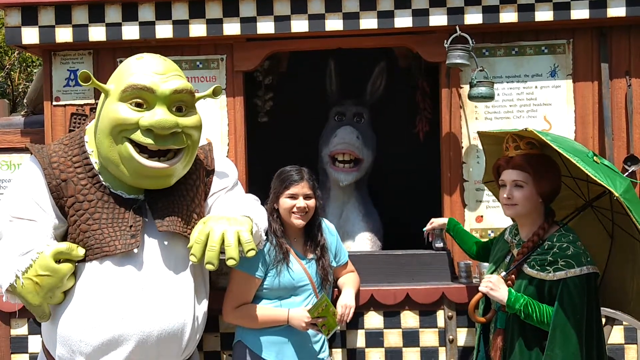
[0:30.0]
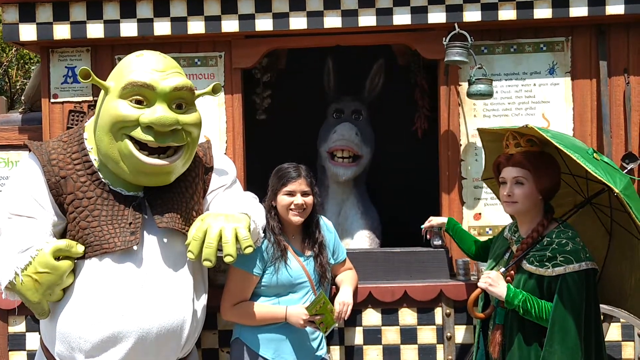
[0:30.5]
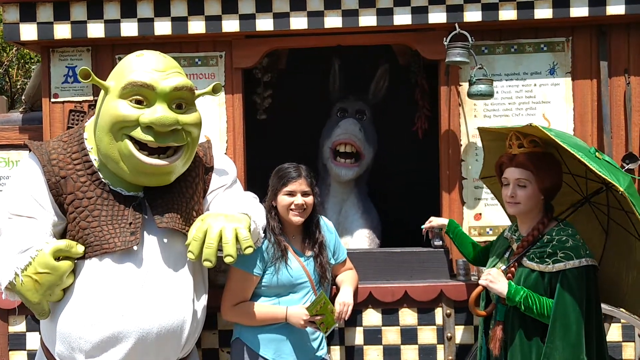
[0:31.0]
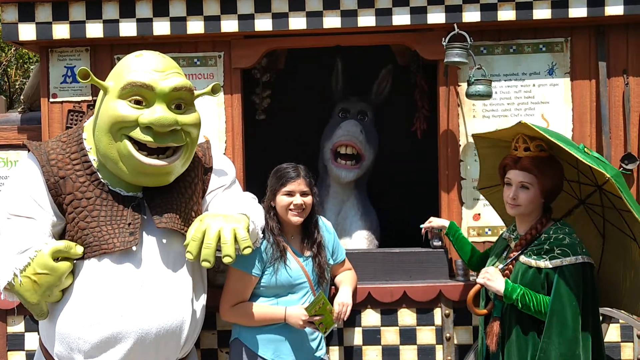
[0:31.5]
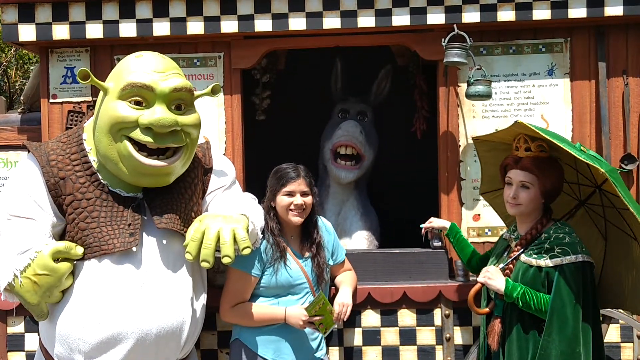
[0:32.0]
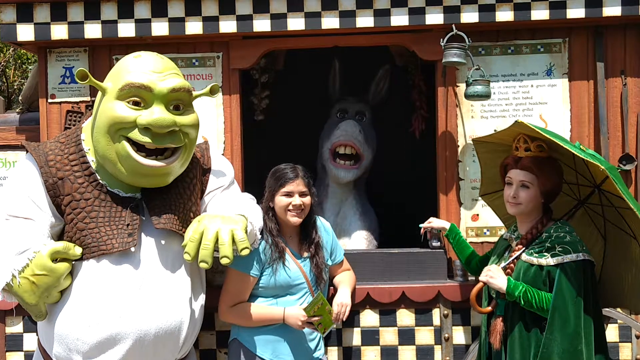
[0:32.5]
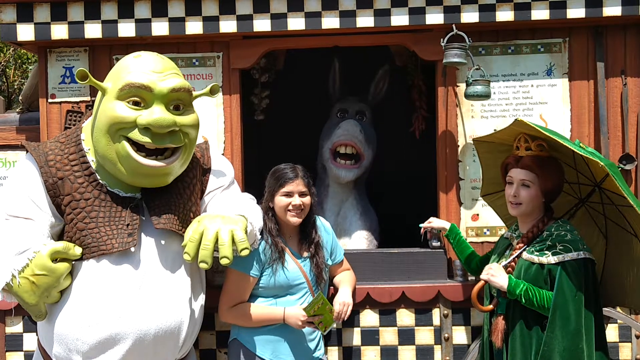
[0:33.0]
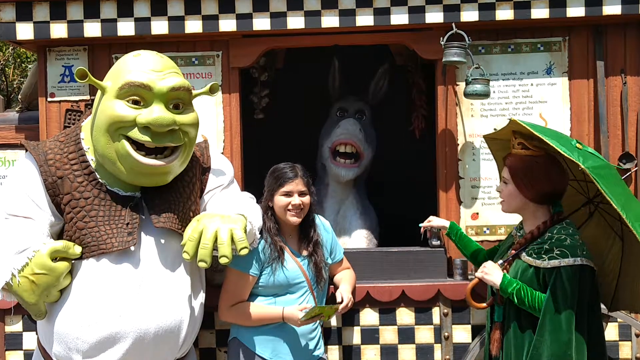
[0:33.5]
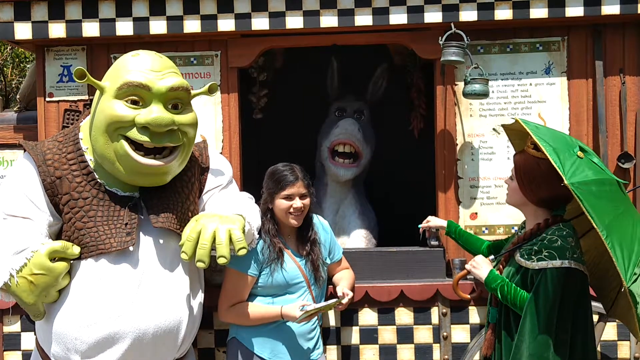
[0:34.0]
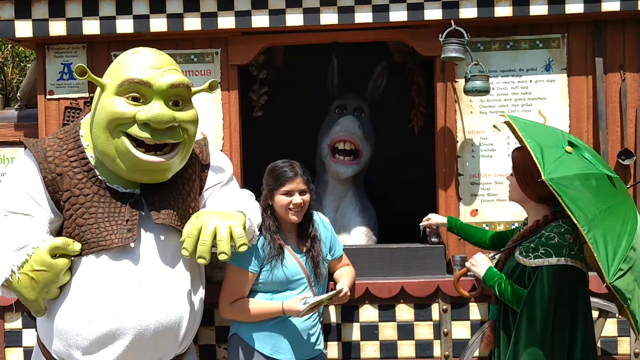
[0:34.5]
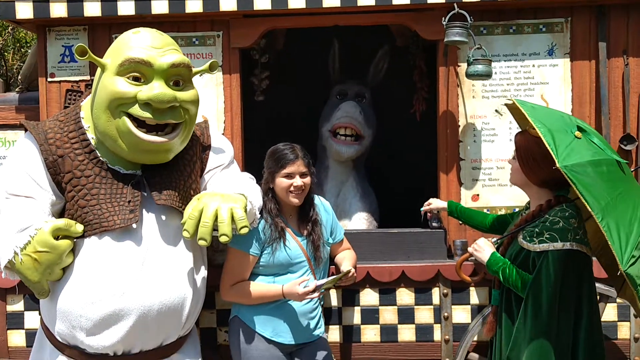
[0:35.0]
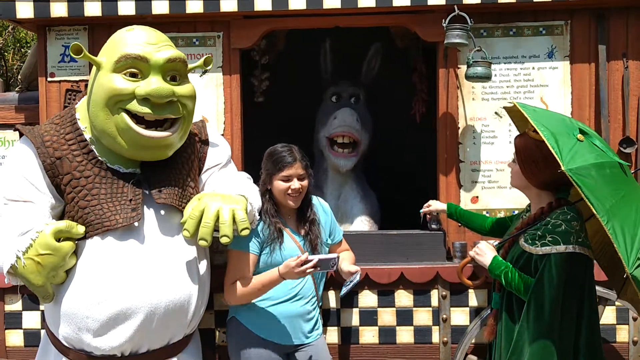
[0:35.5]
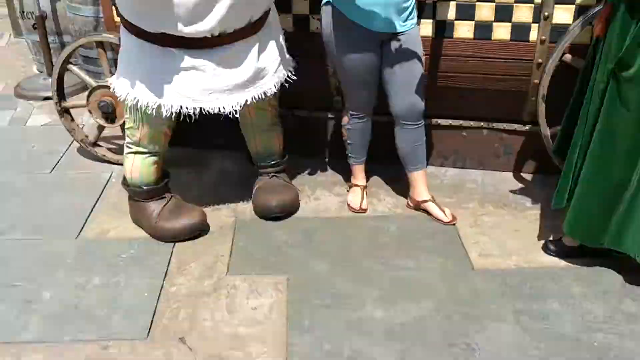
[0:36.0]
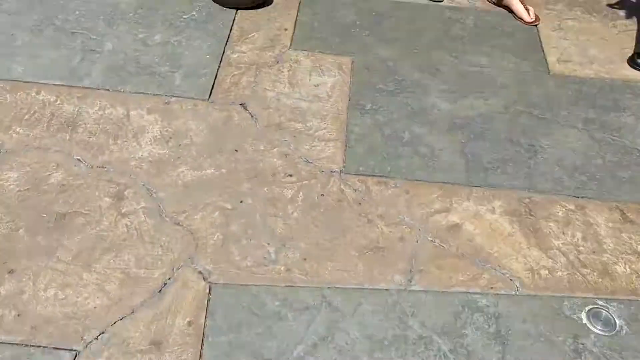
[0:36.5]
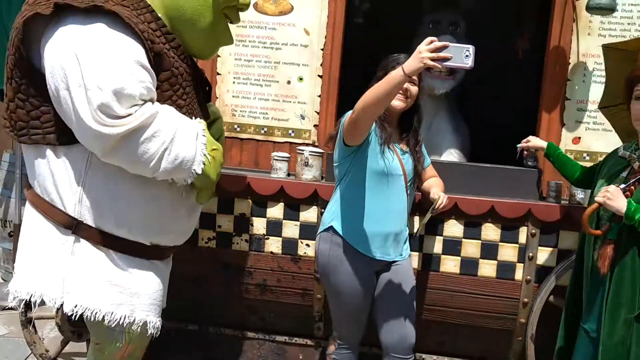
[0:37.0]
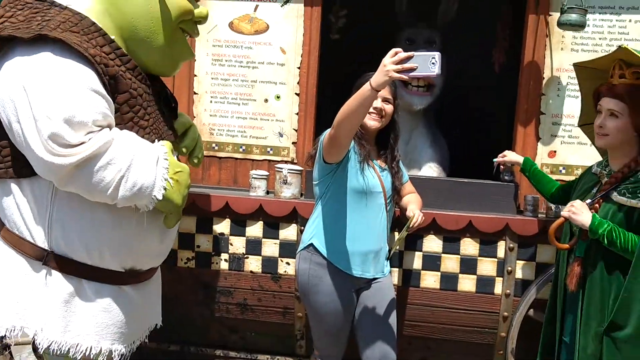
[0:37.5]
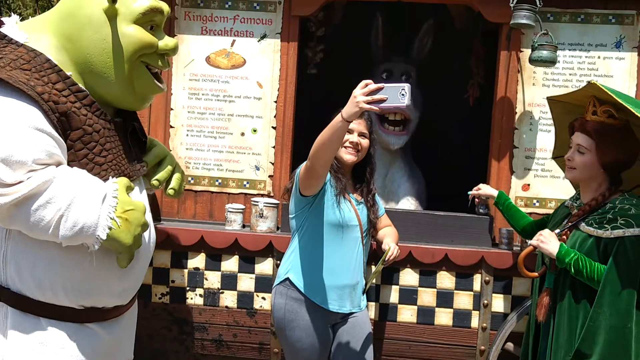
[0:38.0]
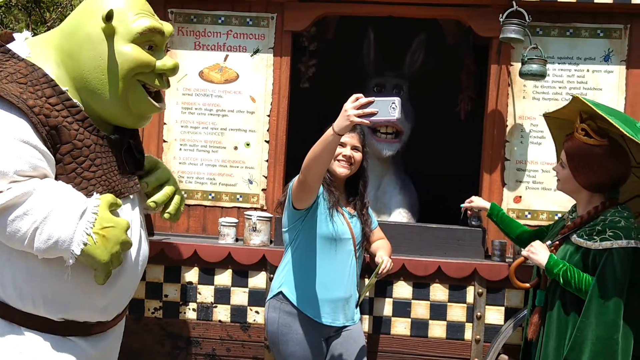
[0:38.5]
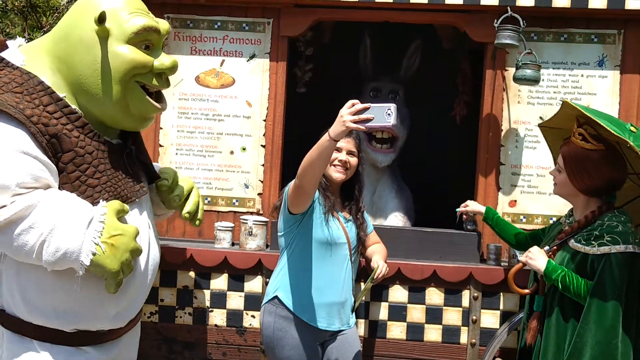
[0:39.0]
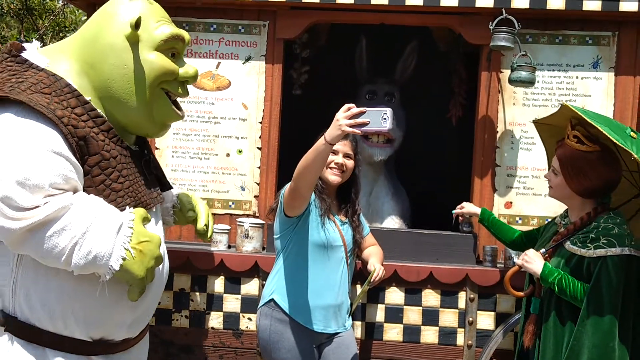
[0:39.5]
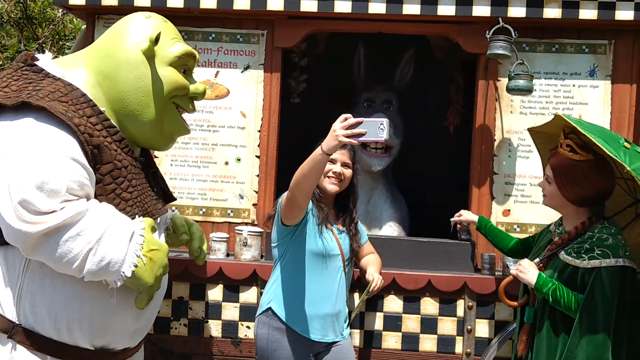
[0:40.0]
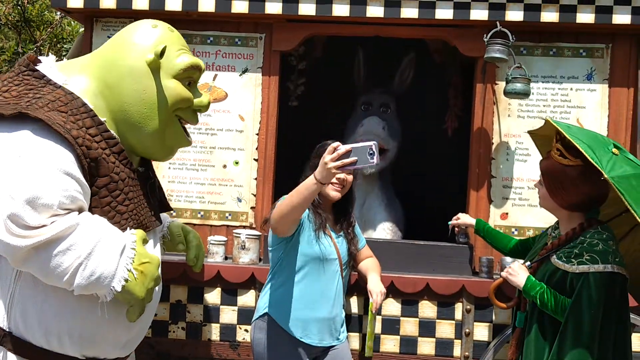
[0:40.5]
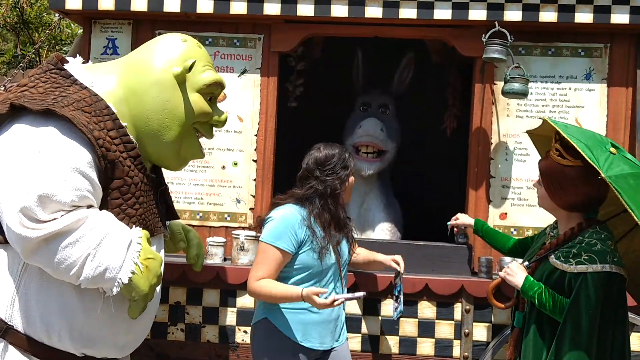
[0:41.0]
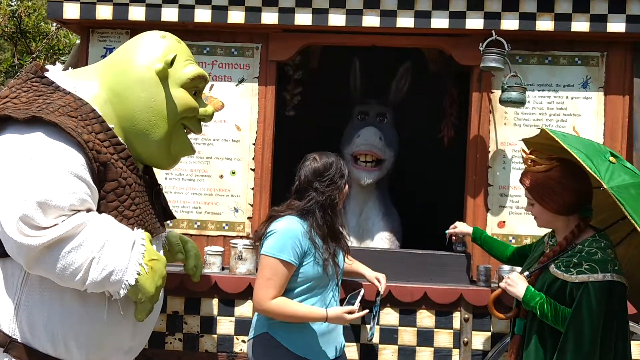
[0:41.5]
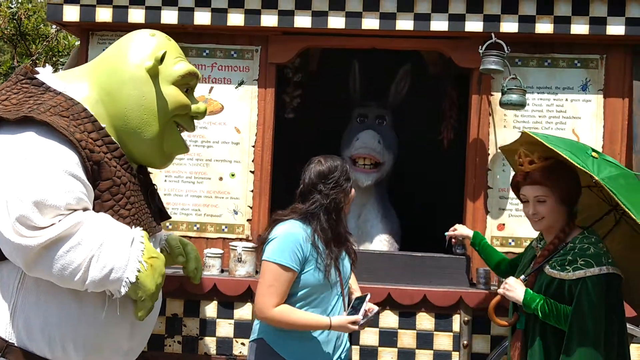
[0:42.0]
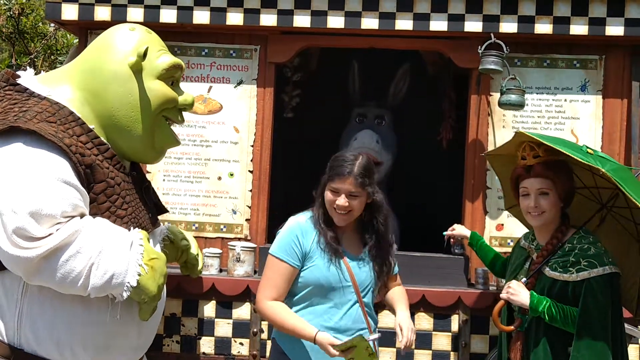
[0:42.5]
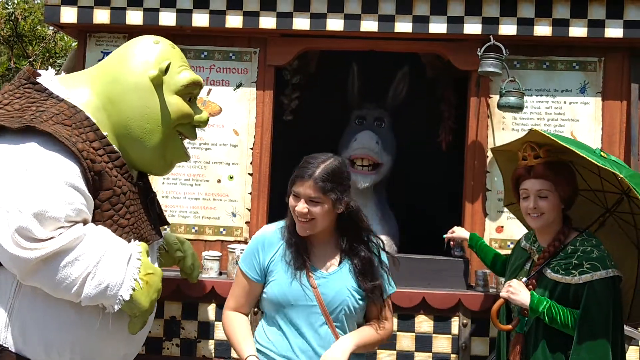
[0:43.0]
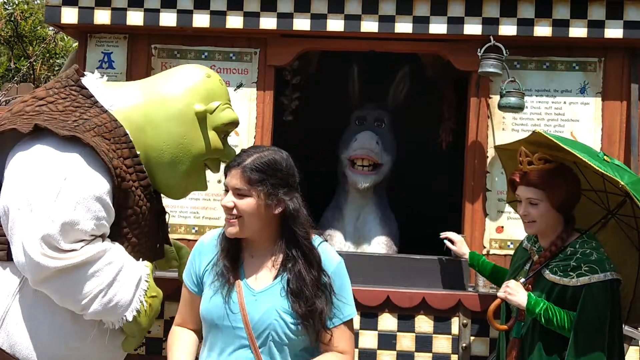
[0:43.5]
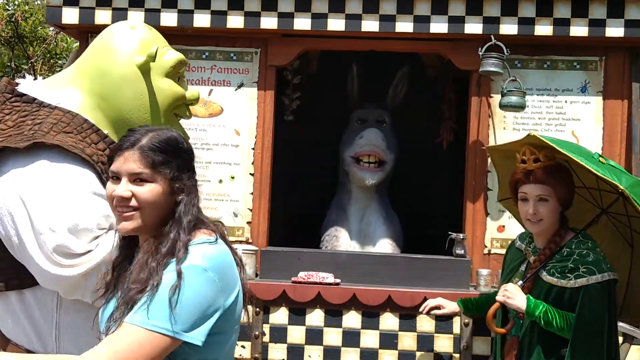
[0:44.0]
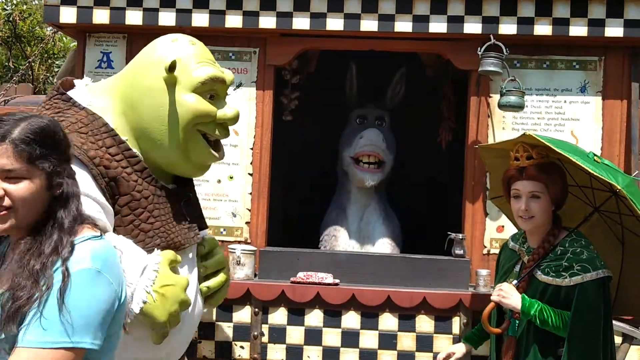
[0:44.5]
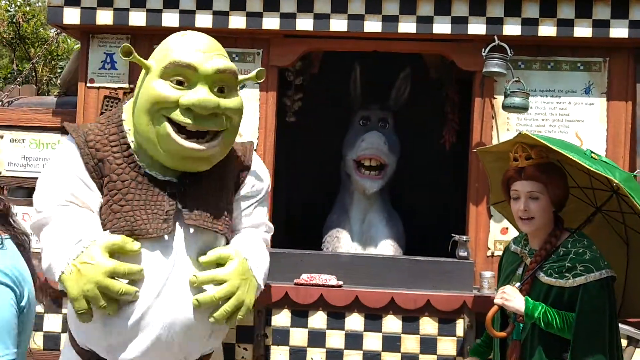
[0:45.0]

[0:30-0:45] Just before the picture is snapped, Shrek has his left arm on the girl's right shoulder as they look toward the camera. Donkey is behind the booth; his mouth has stopped moving and he is kind of smiling with his teeth. Fiona has her right arm out to the side and holds her umbrella with her left arm, the umbrella leaning against her left shoulder, and she looks toward the camera. Her hair is kind of up on top of her head, with a braid coming out around the side and laying on the left-hand side of her clothing. The person with the camera brings it downward, showing the ground of big gray stones in shades of gray, probably about 12 inches by 12 inches, then brings it back up to take the picture. The girl wears a light-colored t-shirt and has a purse or messenger bag draped across her right shoulder and leaning on her left hip. She says something to Shrek and the others or to the person taking the picture, and then takes a selfie that captures herself with Donkey behind her.